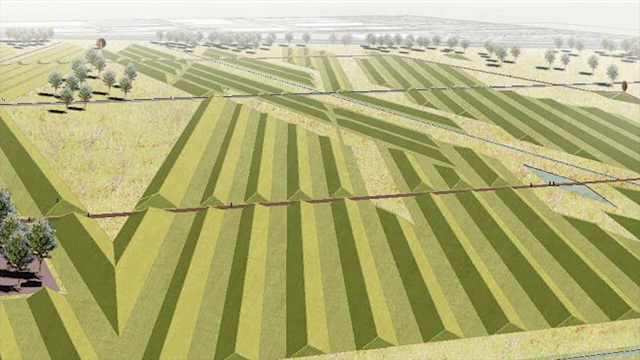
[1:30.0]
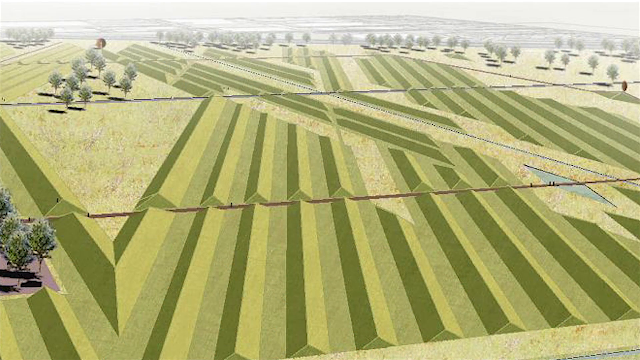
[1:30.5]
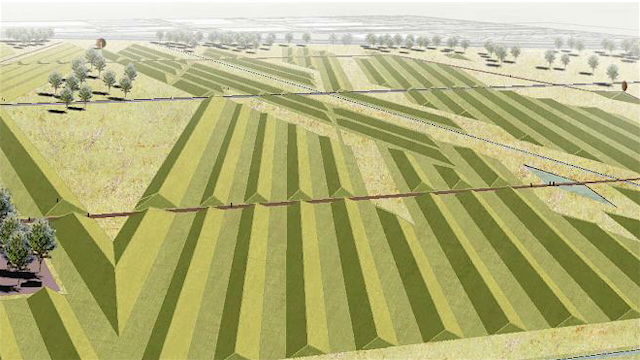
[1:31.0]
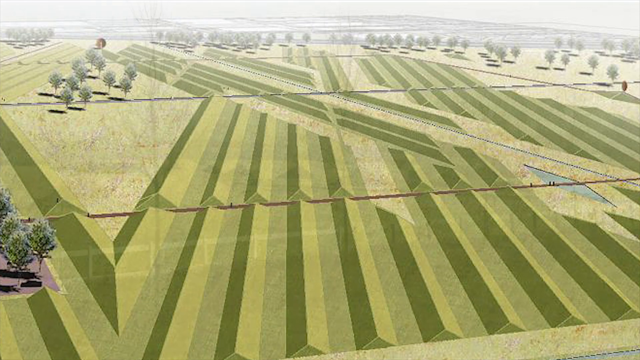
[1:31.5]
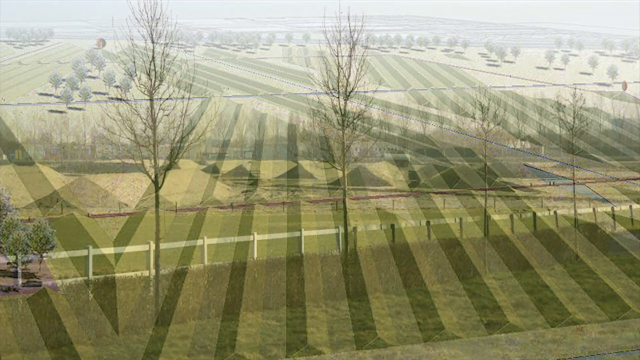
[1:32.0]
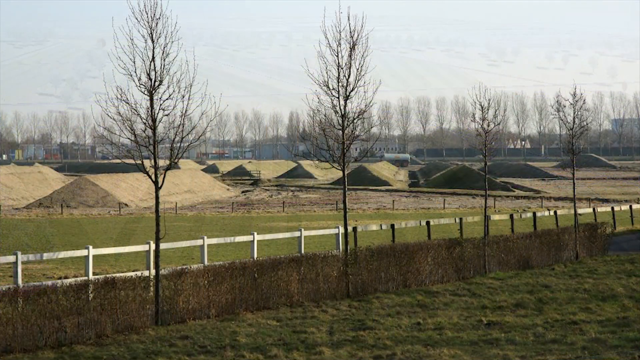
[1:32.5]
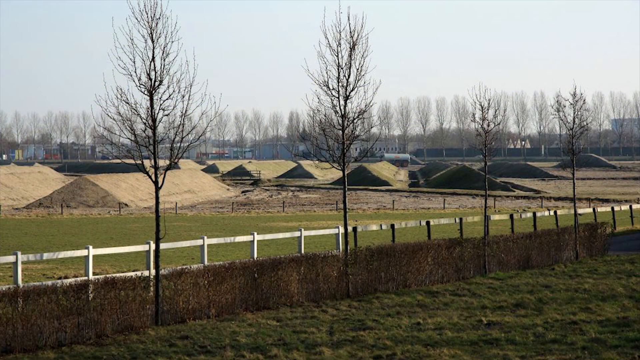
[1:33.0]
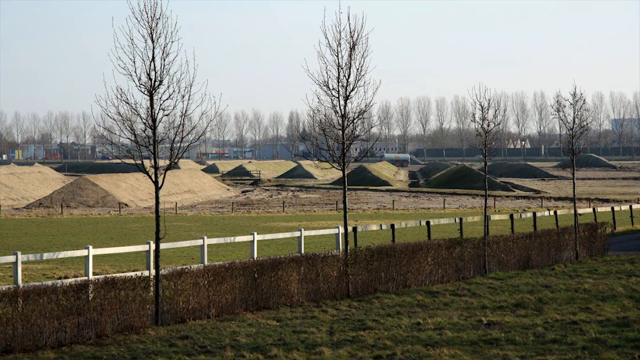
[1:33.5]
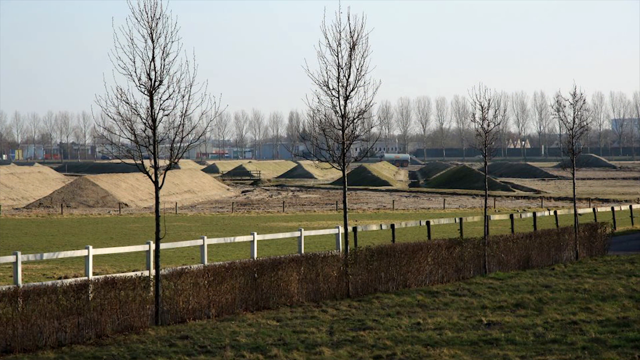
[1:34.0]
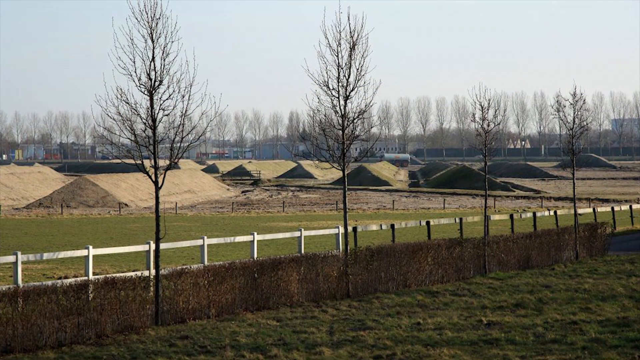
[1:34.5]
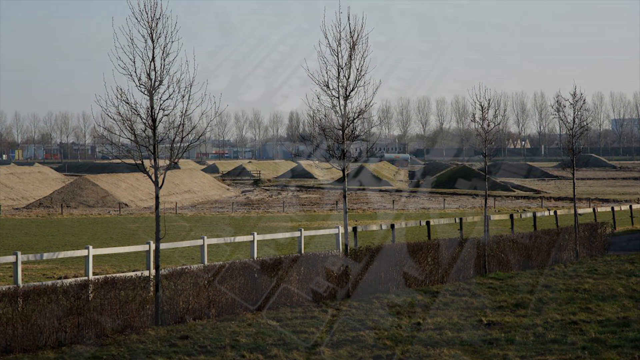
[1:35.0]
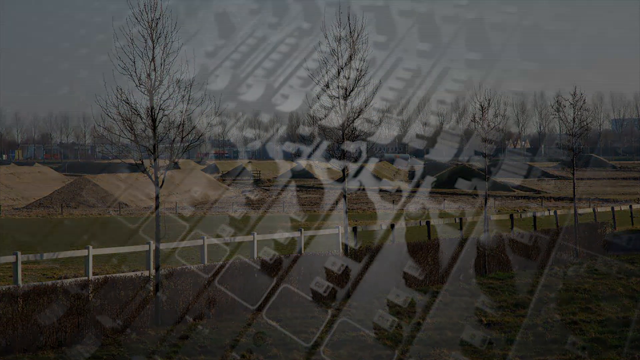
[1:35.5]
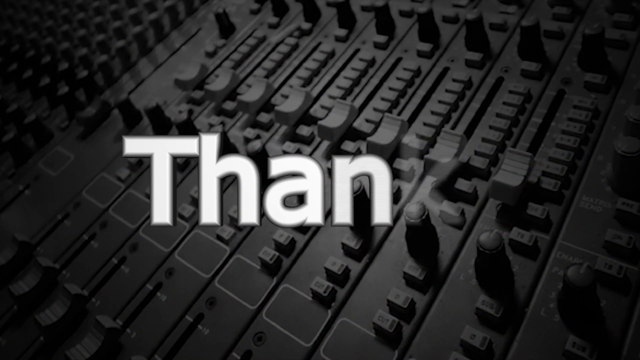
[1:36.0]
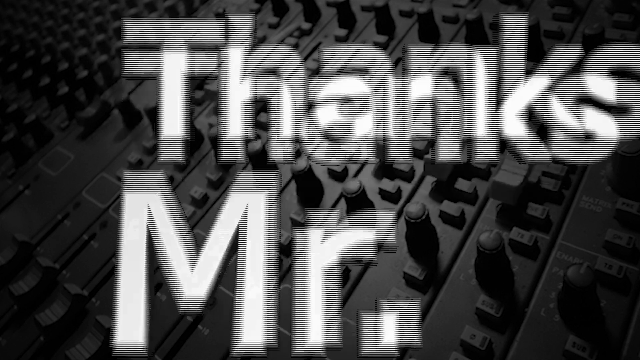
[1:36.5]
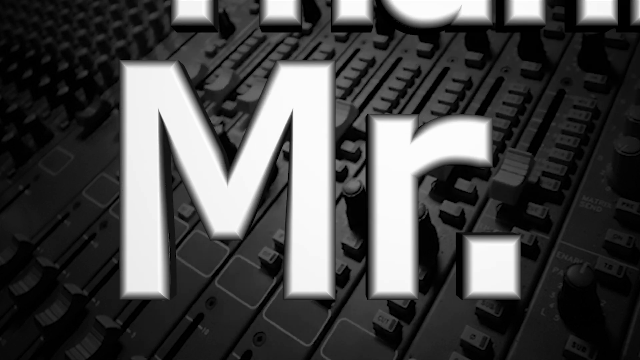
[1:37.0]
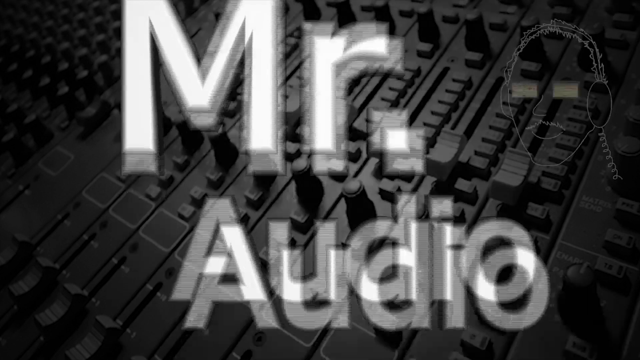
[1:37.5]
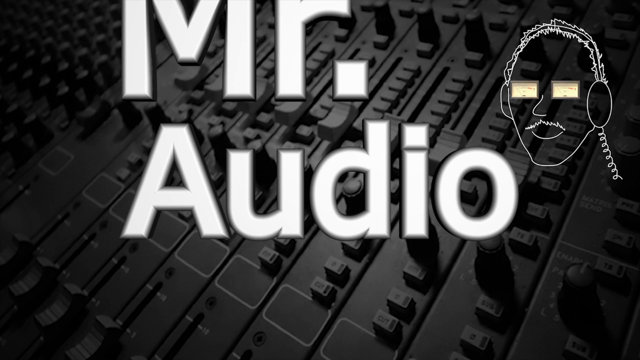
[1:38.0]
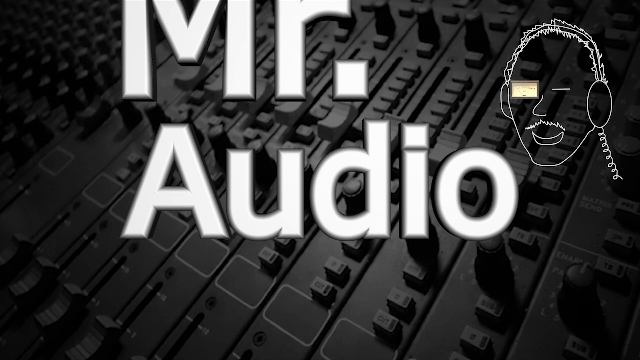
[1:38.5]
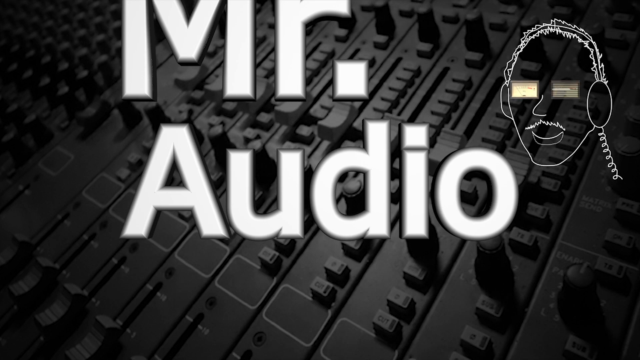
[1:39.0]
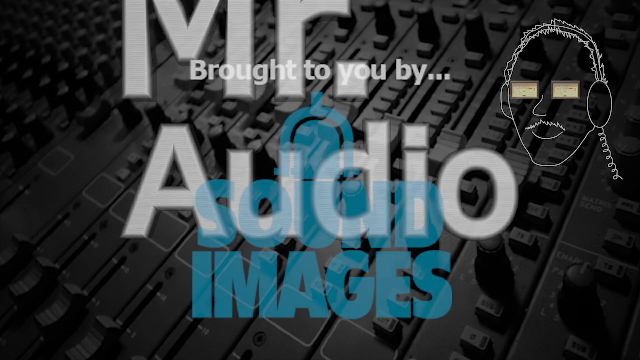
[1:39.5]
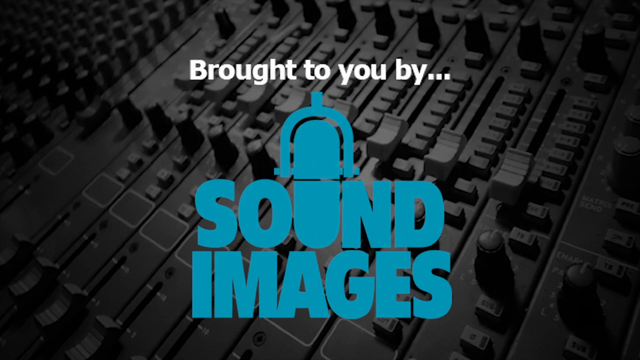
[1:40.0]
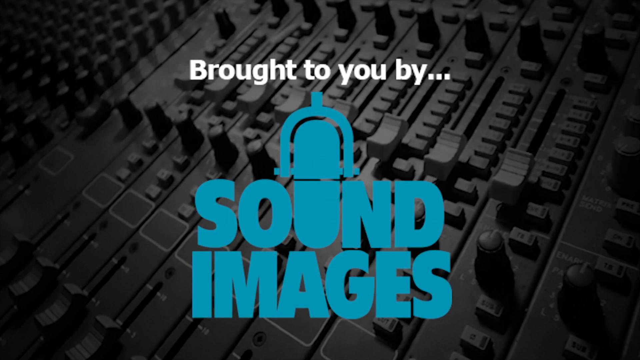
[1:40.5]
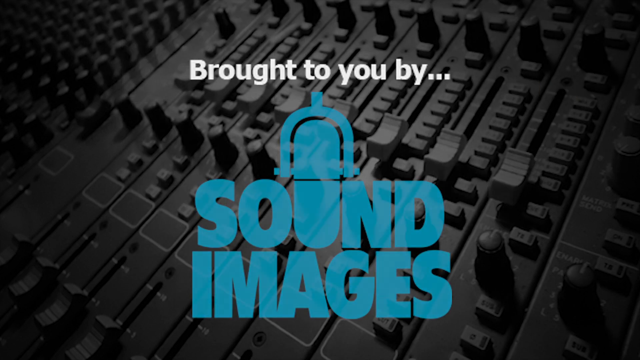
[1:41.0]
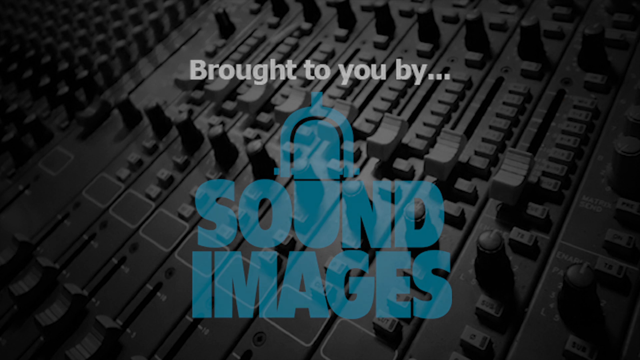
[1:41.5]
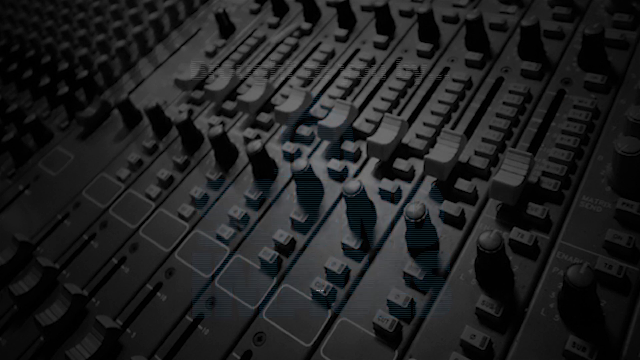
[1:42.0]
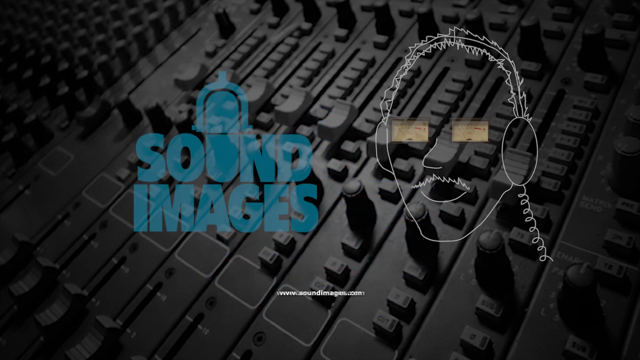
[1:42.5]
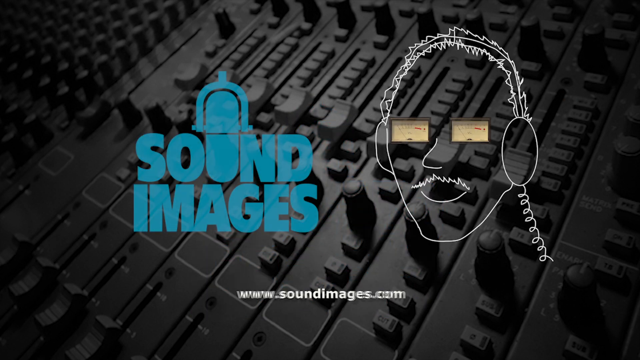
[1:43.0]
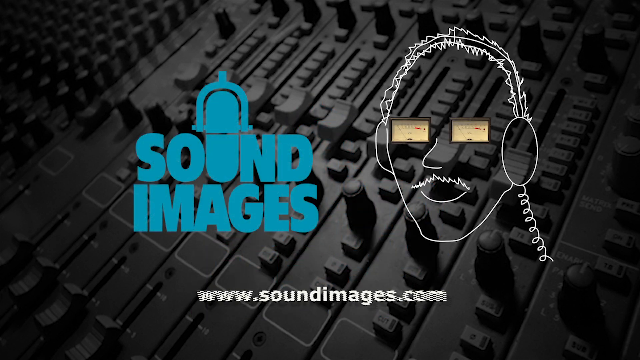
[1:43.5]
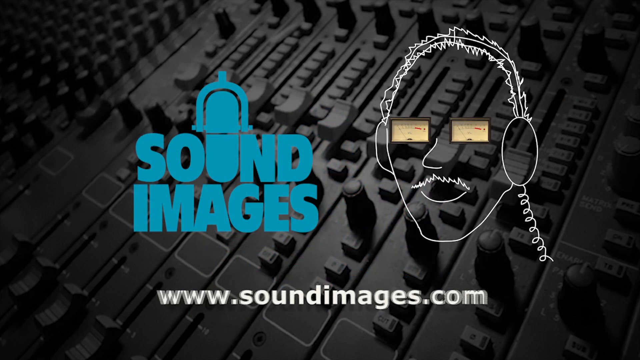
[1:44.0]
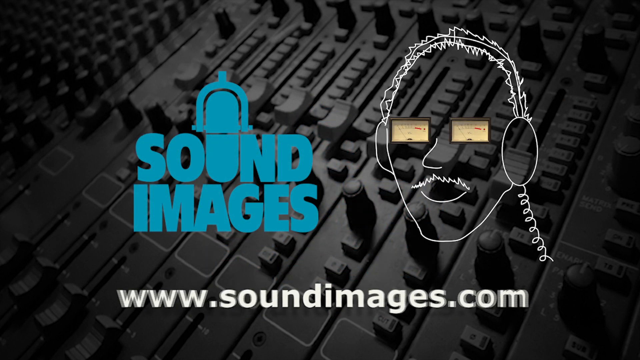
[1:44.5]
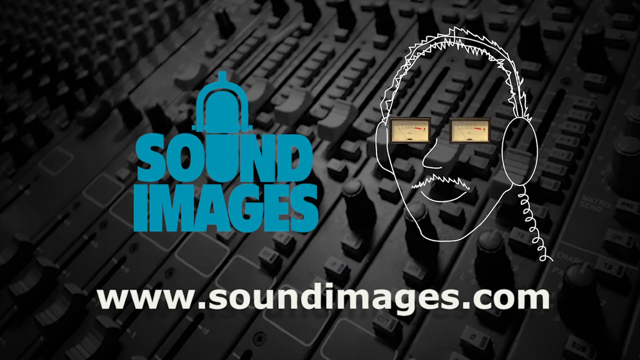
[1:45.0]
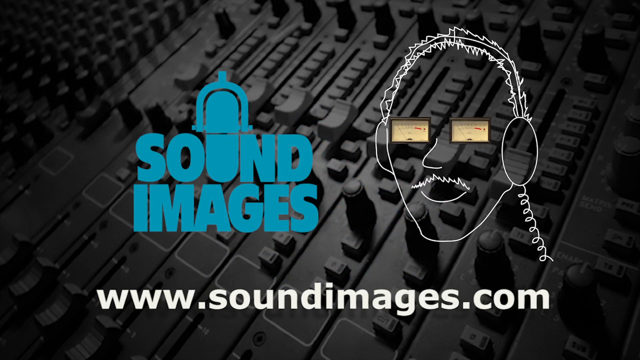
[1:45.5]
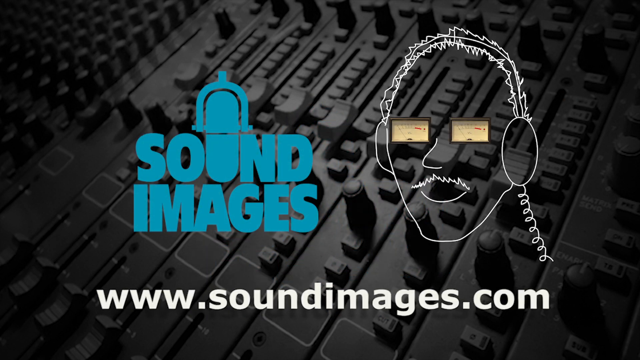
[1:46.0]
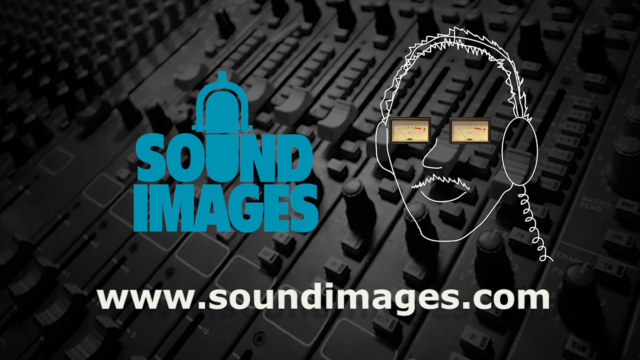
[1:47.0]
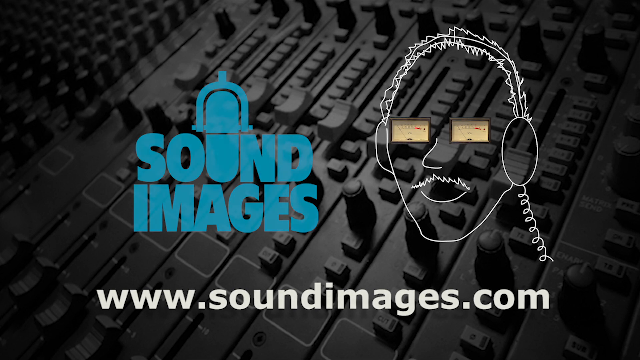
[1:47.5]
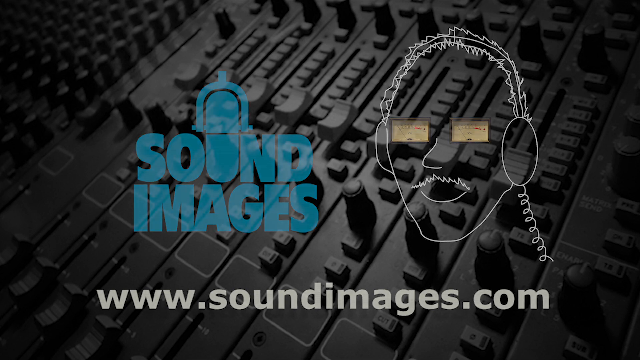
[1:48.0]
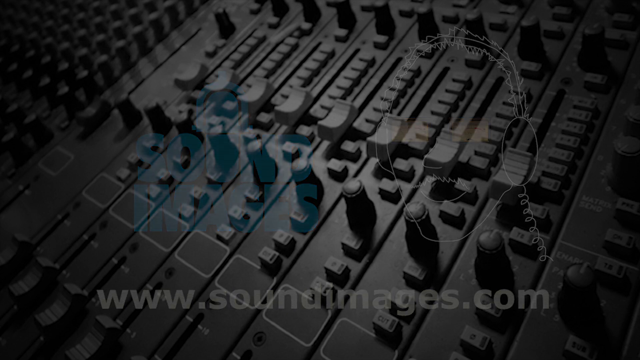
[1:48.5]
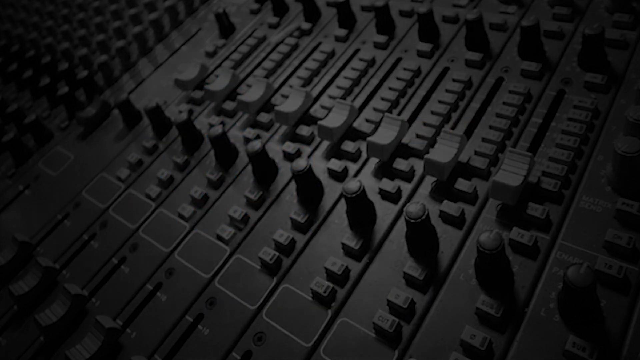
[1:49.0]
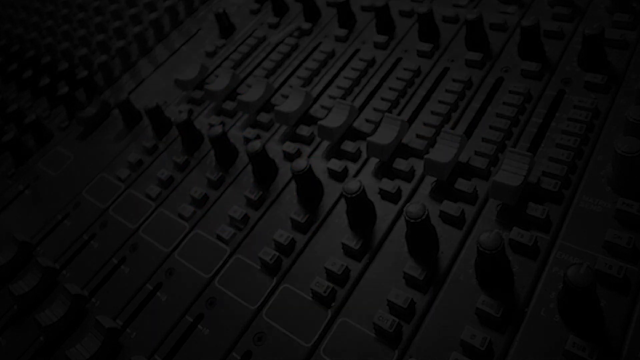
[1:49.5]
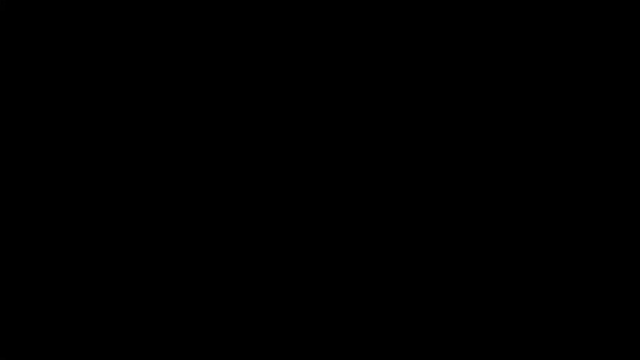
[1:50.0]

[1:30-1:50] An aerial still image of an agricultural planting, more like a drawing than a photograph, shows alternating rows in three shades of green: dark, light and medium. On closer inspection it looks like some type of long triangular structures extending the length of the field toward the horizon in one direction, intersected by similar structures running diagonally toward the horizon on the left. The picture dissolves to a ground-level photo showing what appears to be some type of wedge. In the foreground is a white fence, apparently less than four feet tall, with about four small trees planted along it, in what appears to be a ranch or farmland. Along the fence there appears to be a very thin layer of trimmed, deliberately placed brown brush, parallel to the fence and reaching only halfway up its height. In the mid-ground and background are long triangular mounds, apparently what was seen in the aerial shot. The video transitions to a still photo of the gray recording mixing board. The words "thanks, Mr. Audio" fade in in white sans-serif font and animate up and to the left, along with a white line drawing of a face with a slight mustache wearing headphones, with eyes represented by audio VU meters, apparently Mr. Audio. One VU meter eye closes temporarily and opens again in a wink. White sans-serif lettering reads "brought to you by...", and a logo fades in reading "sound images" in a very bold aqua blue font; the letter U in "sound" is shaped like an RCA ribbon microphone and protrudes above the word, with "images" below. The screen reads "brought to you by sound images". Mr. Audio disappears, leaving only the logo and text against the mixing board. In the next frame, with the mixing board still the background, a smaller sound images logo is left of center, and the drawing of the man with headphones and VU meter eyes is symmetrically on the right of center. The URL "www.soundimages.com" fades in in the lower portion of the frame, growing bigger as if moving toward the viewer. All three elements fade away, leaving just the mixing board, which then fades away as the frame fades to black.